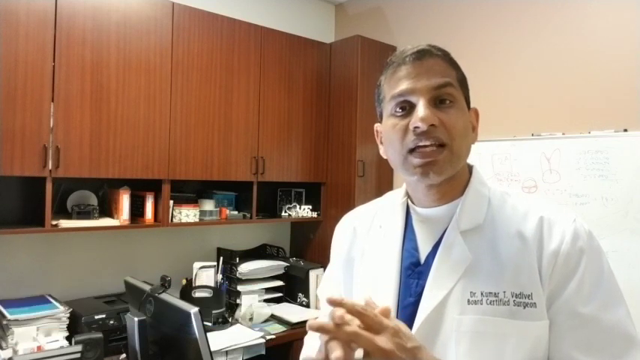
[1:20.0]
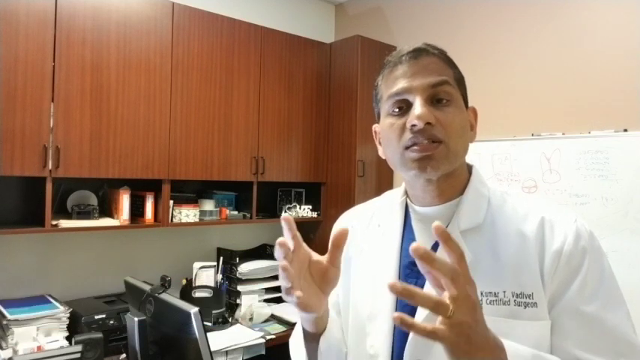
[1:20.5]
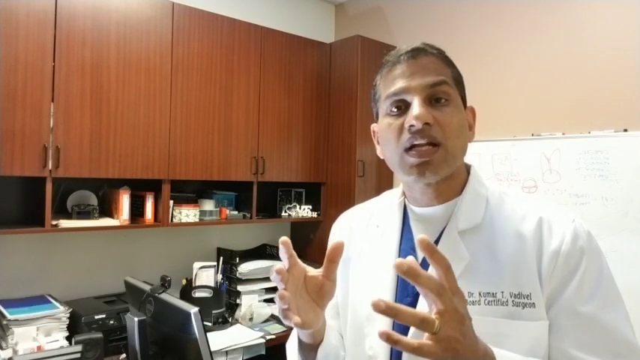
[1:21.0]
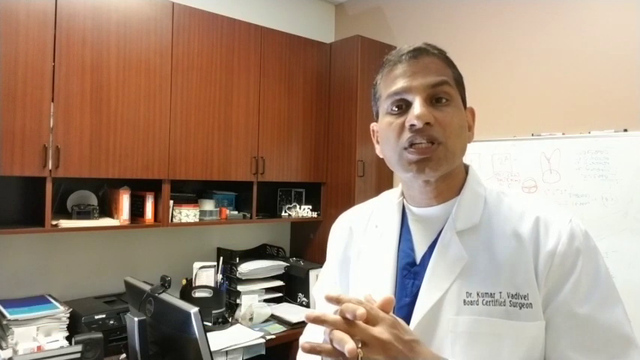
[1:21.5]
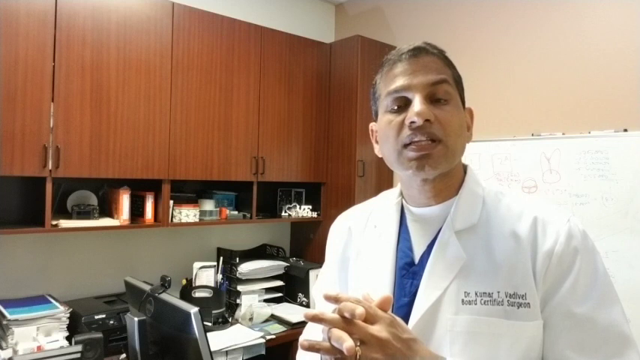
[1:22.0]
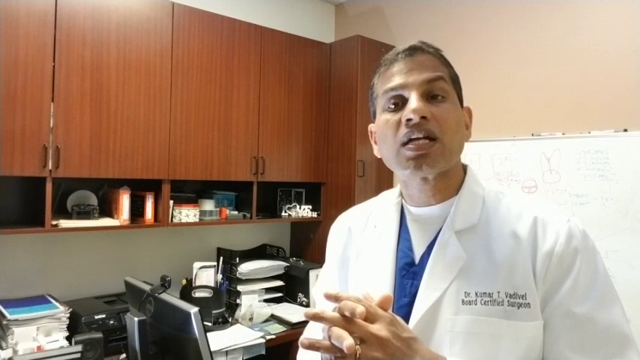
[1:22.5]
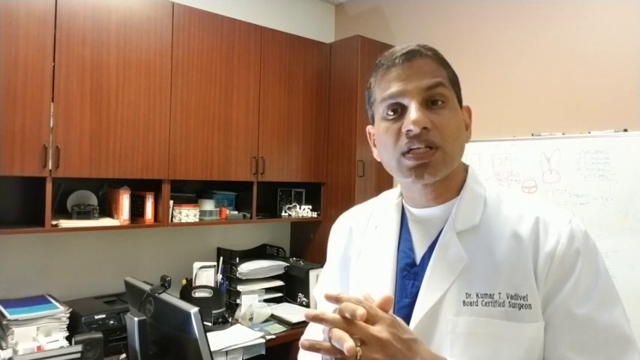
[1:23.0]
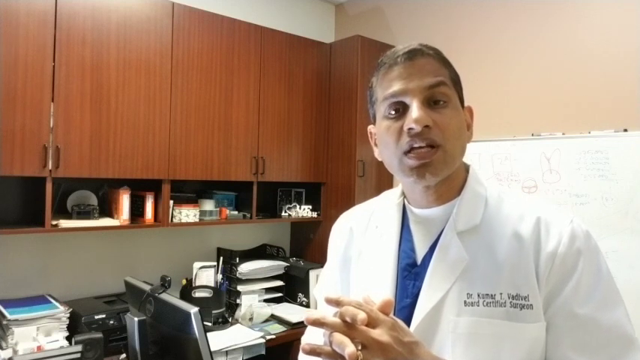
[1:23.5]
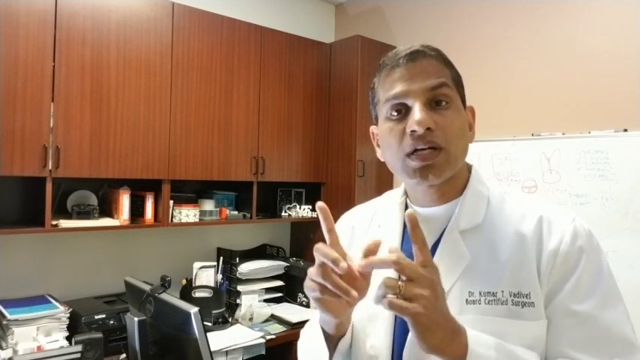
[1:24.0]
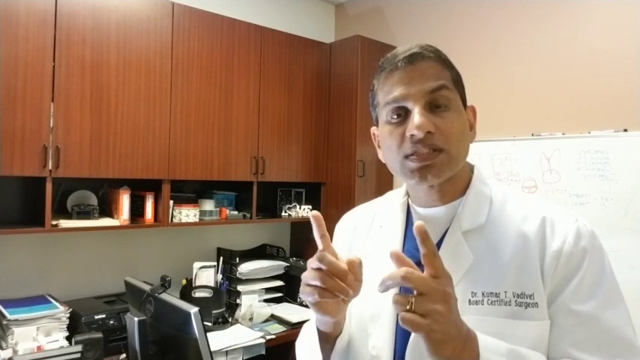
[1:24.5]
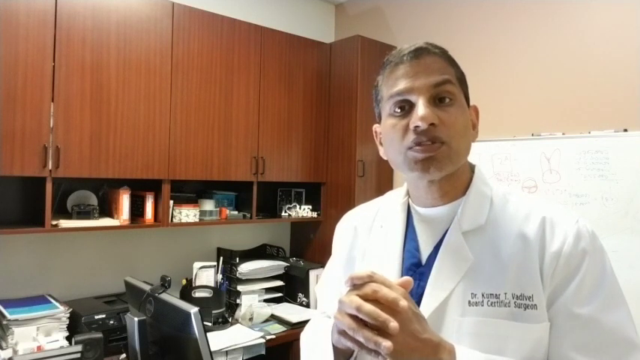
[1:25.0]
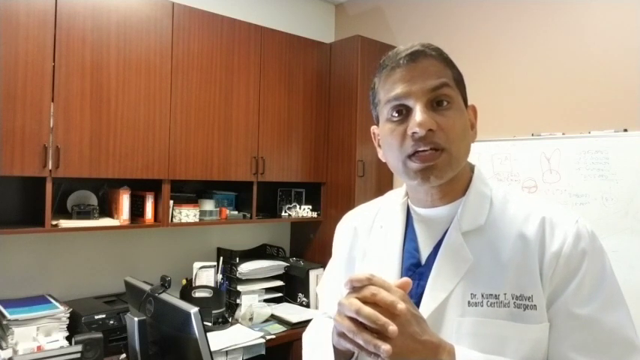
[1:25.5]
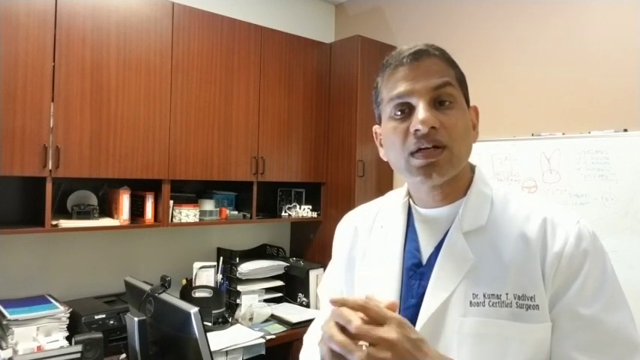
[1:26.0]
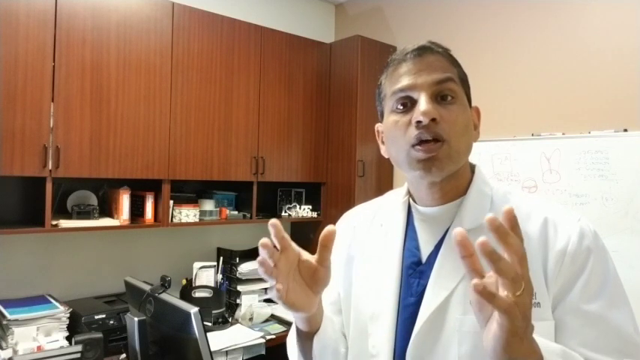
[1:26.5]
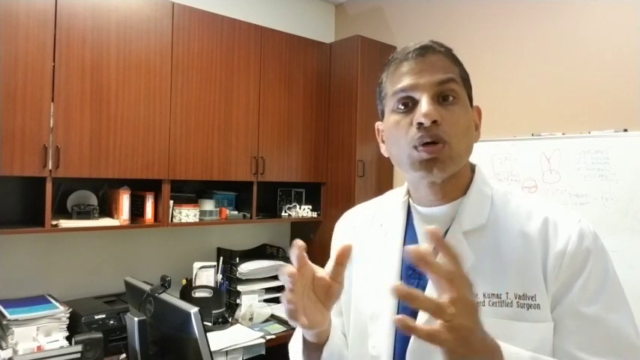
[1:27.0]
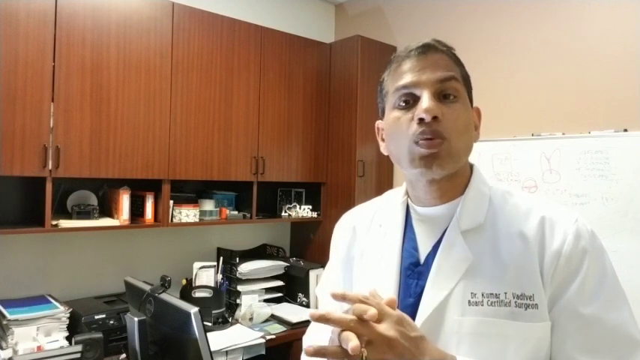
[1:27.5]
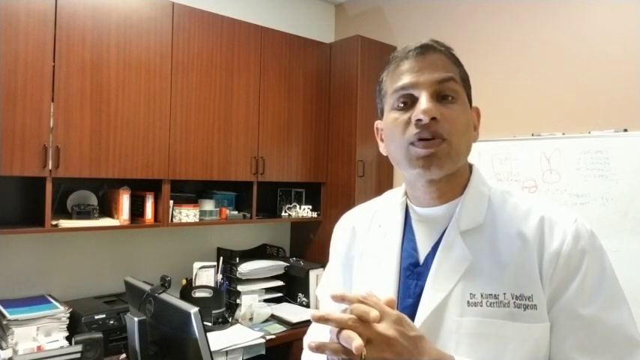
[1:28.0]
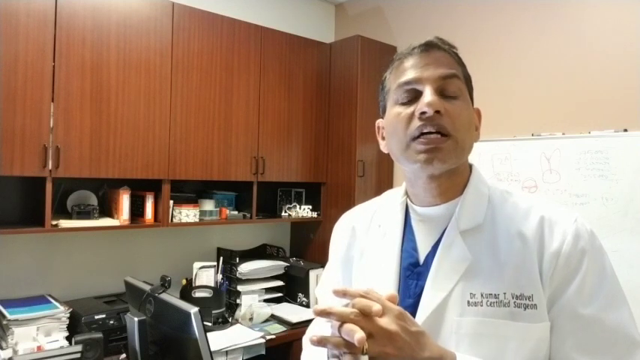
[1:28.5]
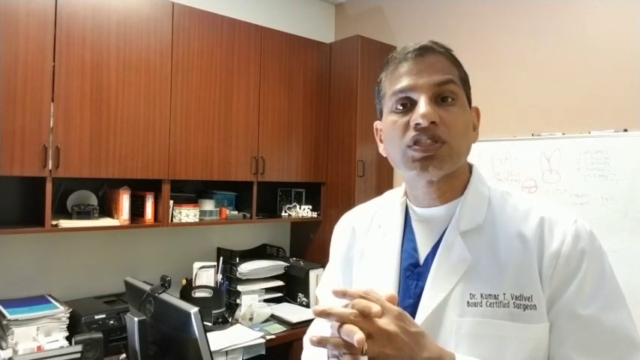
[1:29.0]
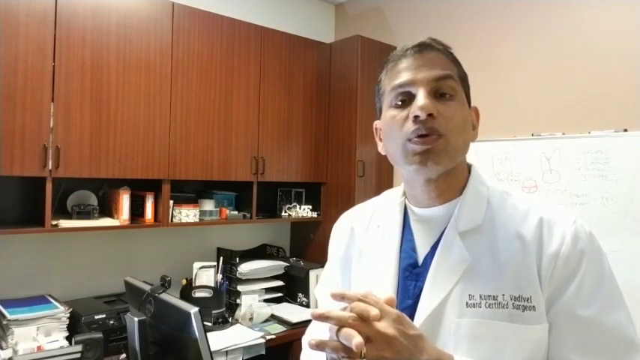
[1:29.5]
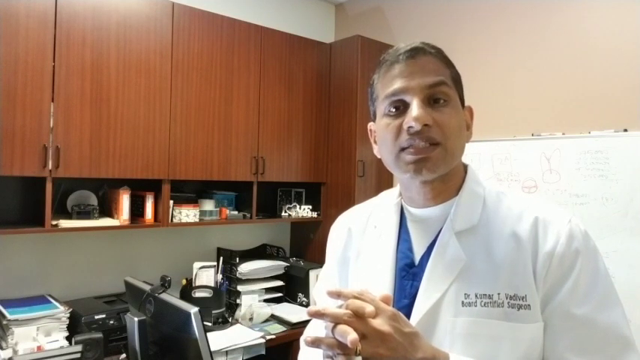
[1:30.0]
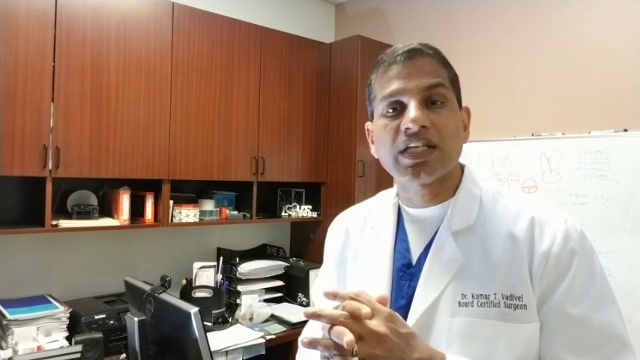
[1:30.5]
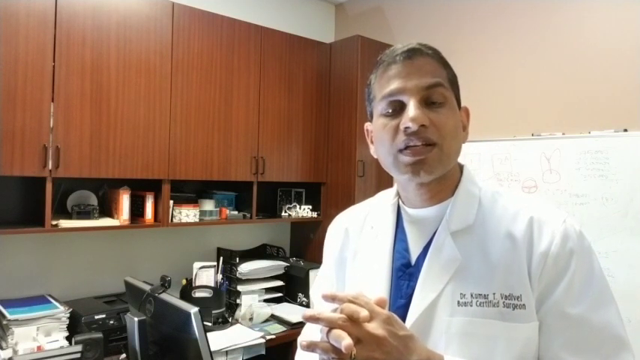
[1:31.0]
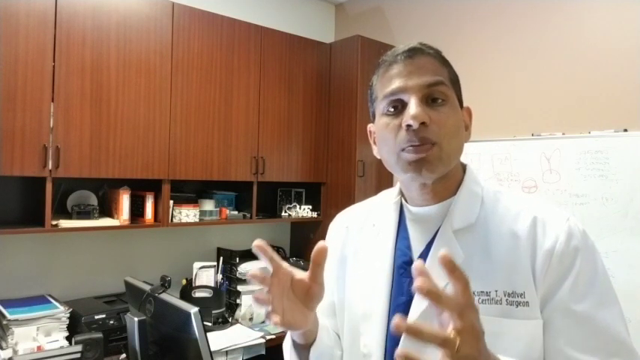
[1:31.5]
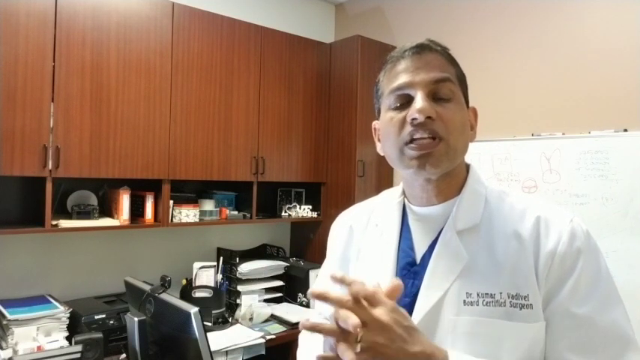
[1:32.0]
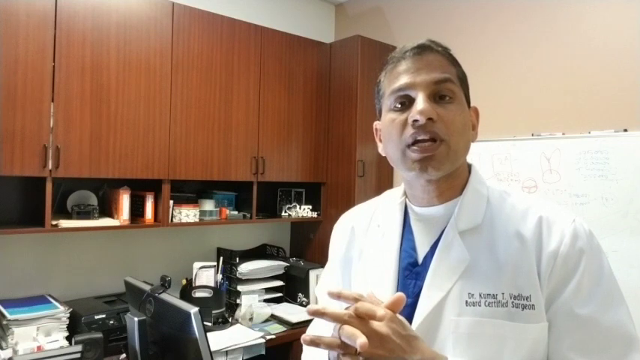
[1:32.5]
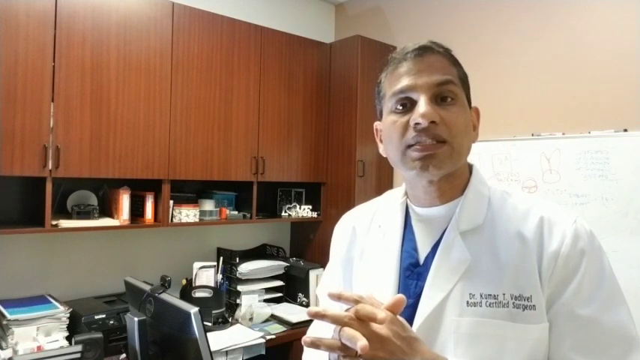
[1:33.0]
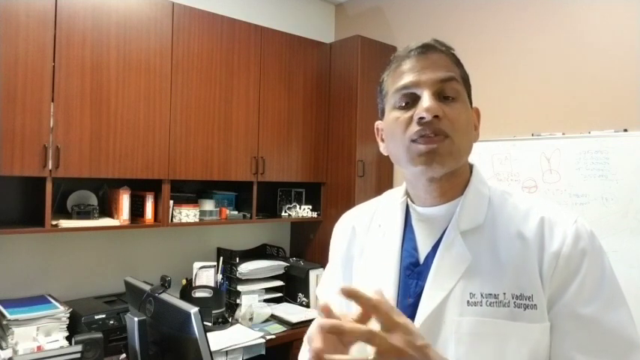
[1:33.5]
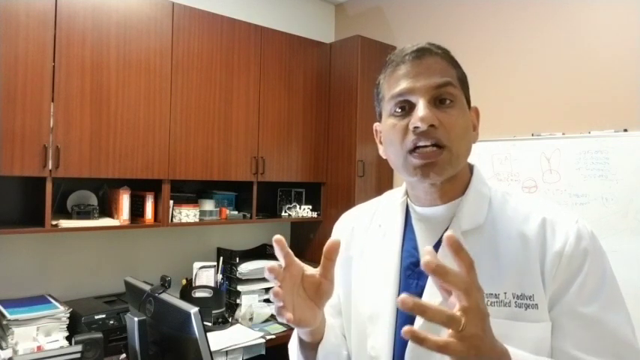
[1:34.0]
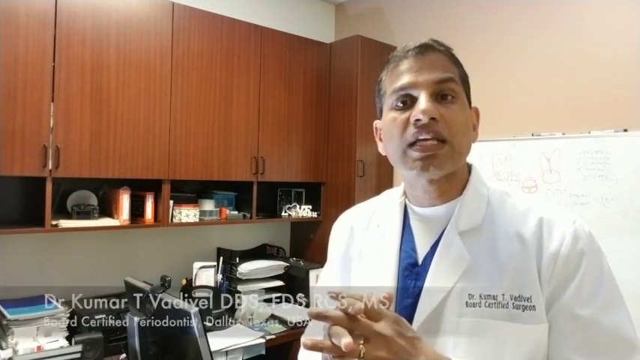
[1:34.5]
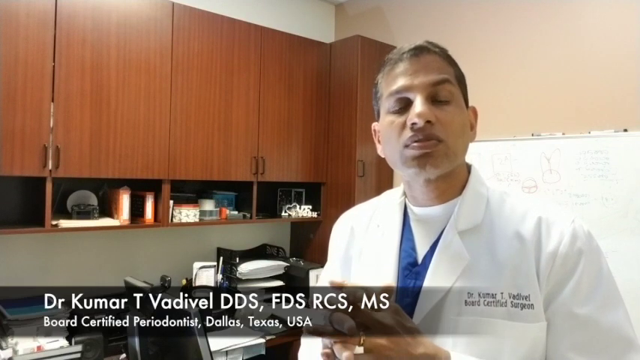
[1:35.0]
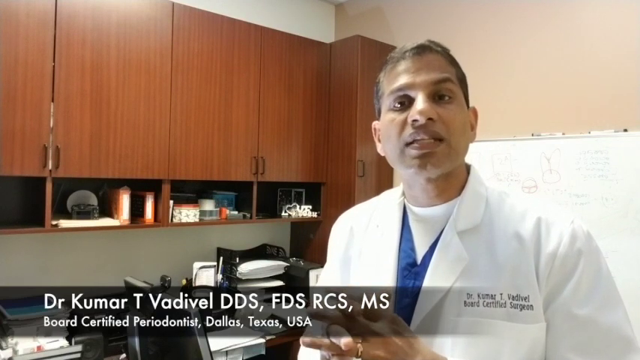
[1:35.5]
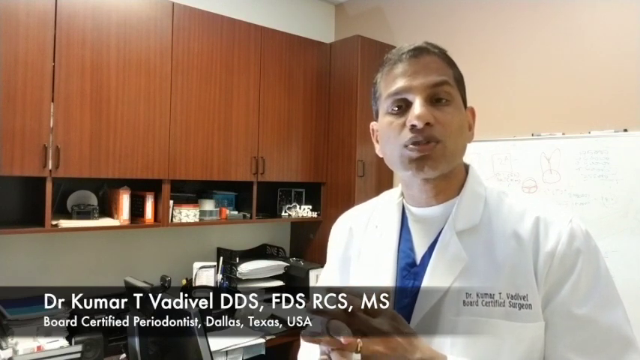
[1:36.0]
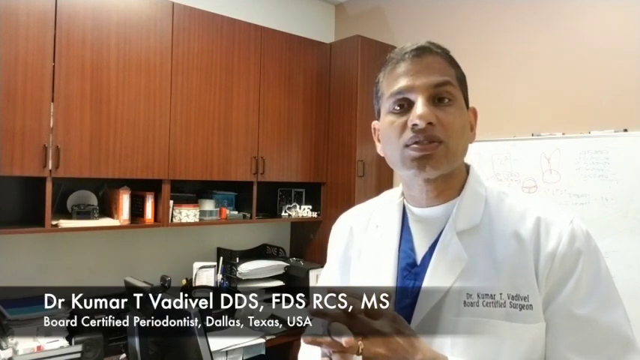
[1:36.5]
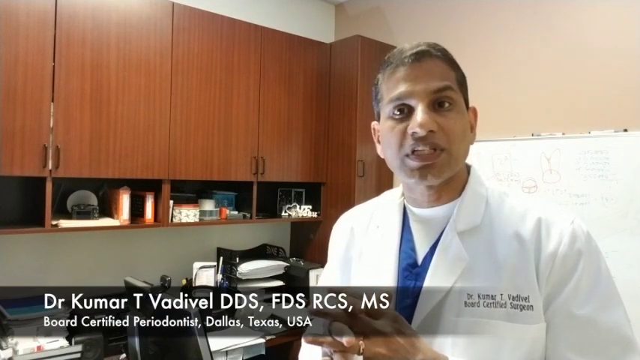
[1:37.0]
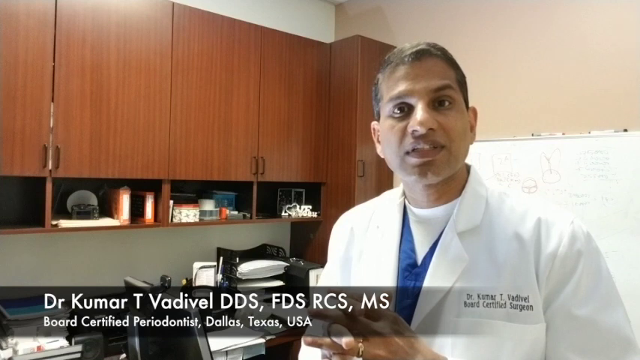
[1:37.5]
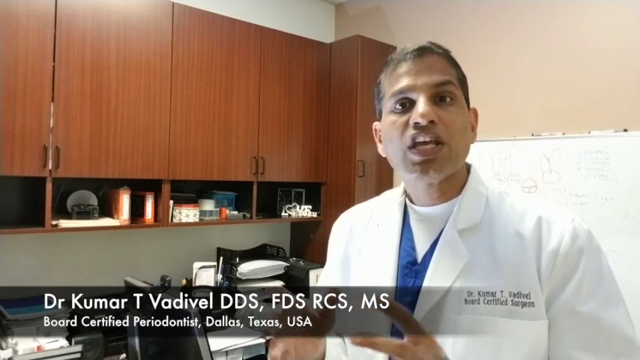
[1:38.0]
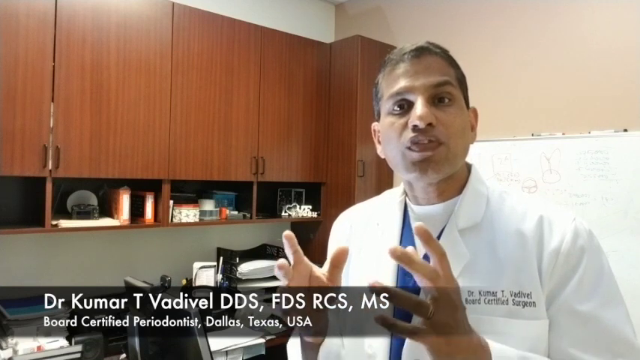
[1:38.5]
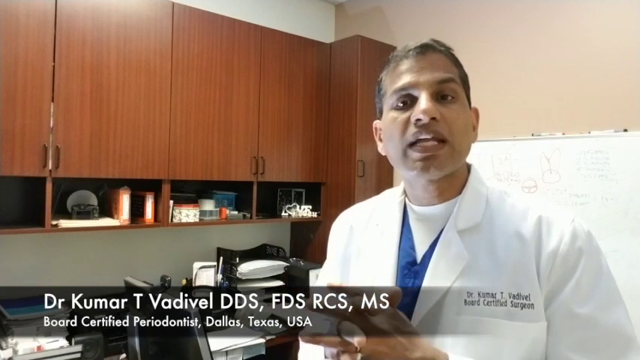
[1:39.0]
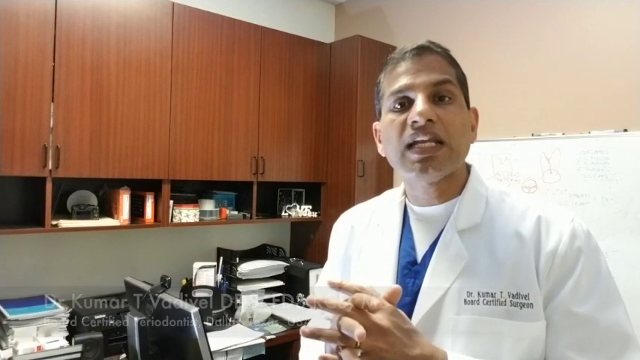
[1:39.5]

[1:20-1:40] The man wears a white lab coat with his name embroidered on the left-hand side above his left breast pocket: "Dr. Kumar T. Vadivel, board-certified surgeon". Dr. Kumar talks into the camera, looking very sincere. His hands are clasped in front of him, just visible at the bottom of the screen; he occasionally unclasps them as if to make a point, uses his finger to point upwards, and then clasps them again. His name appears at the bottom left of the screen in white text on a semi-transparent, shaded grey-black banner, giving his full title as "Dr. Kumar T. Vadivel DDS FDS RCS MS, Board Certified Periodontist, Dallas, Texas, USA". He continues to speak. Behind him to the right is a whiteboard, and to the left are brown wood veneer wall cabinets above a desk with a printer, a Dell computer monitor with a webcam, and various file trays containing white paper.